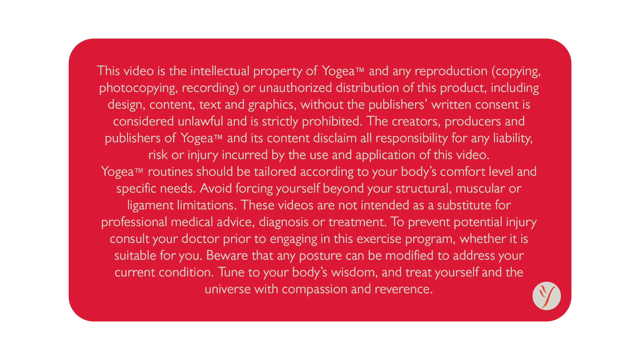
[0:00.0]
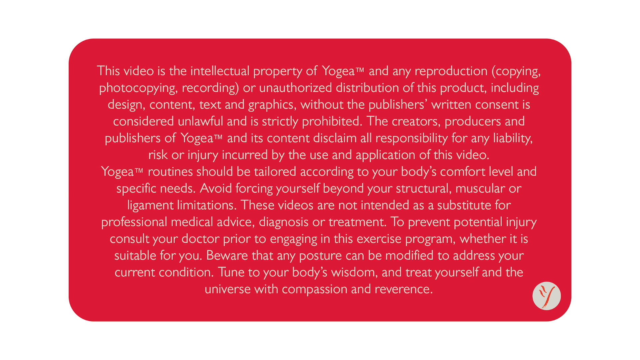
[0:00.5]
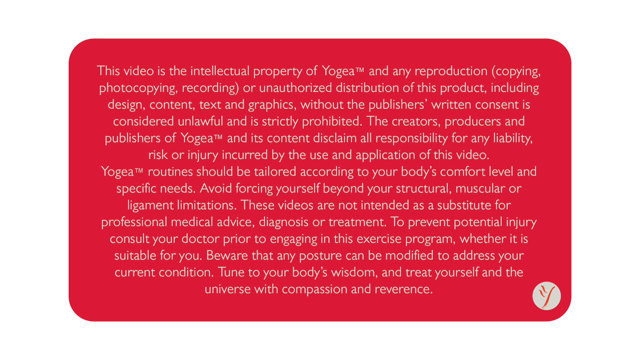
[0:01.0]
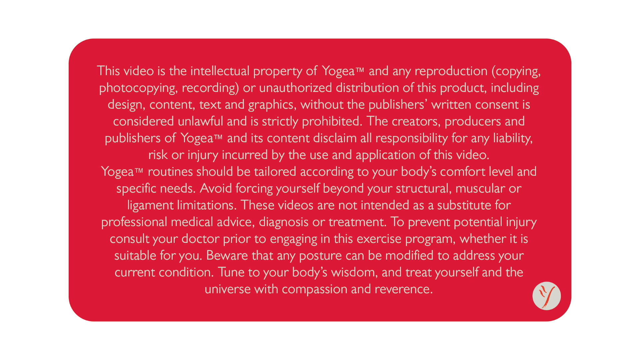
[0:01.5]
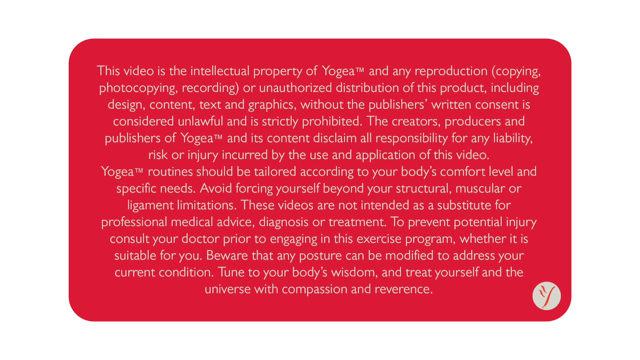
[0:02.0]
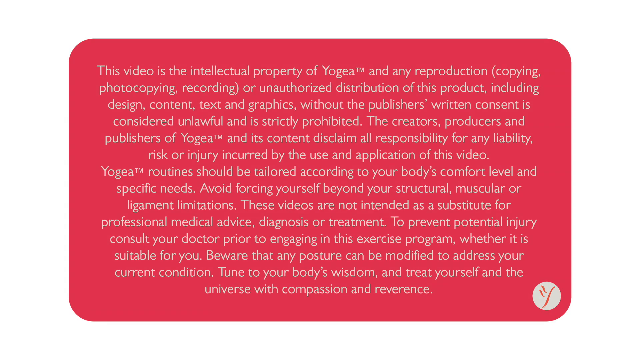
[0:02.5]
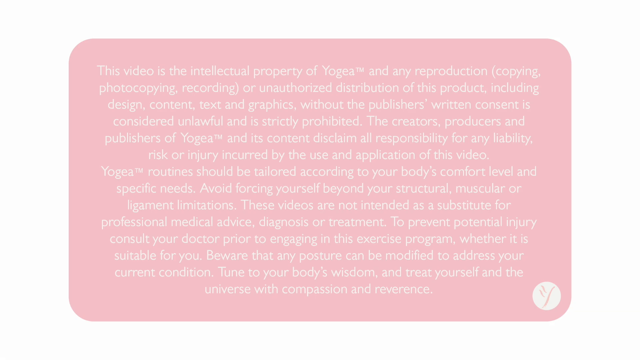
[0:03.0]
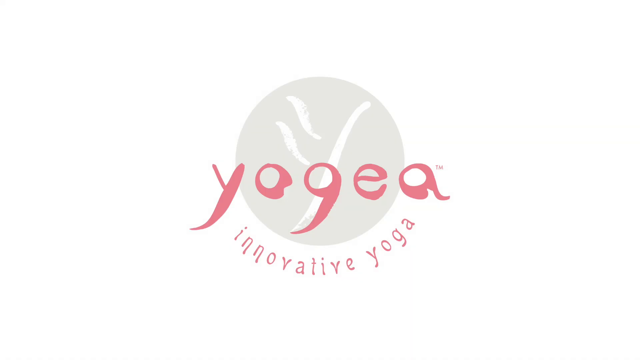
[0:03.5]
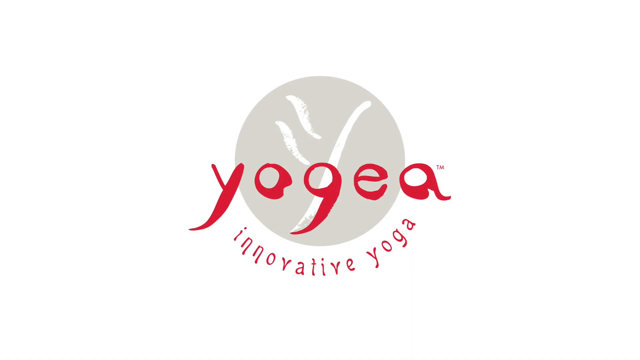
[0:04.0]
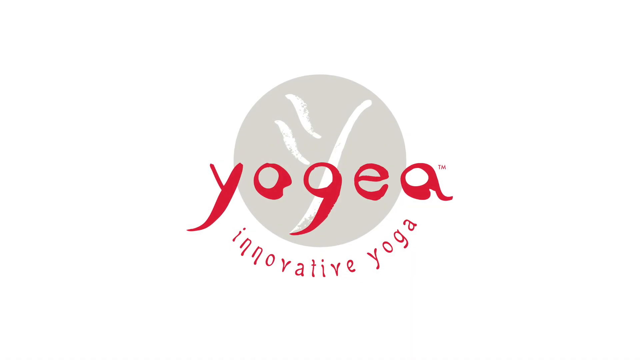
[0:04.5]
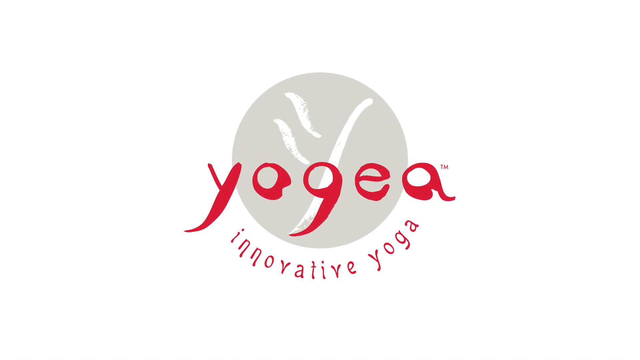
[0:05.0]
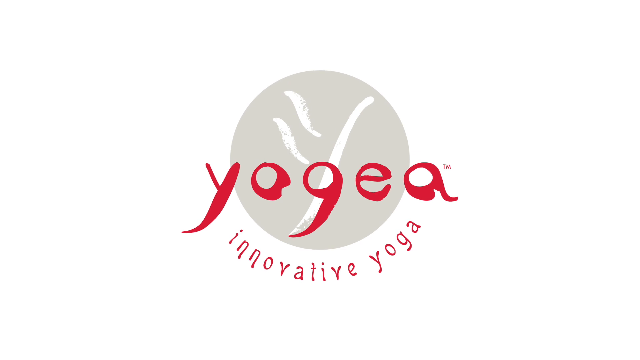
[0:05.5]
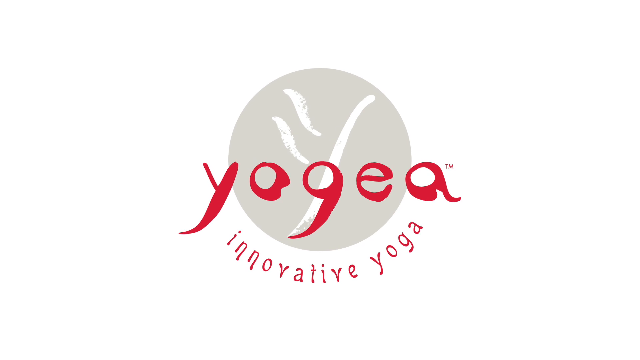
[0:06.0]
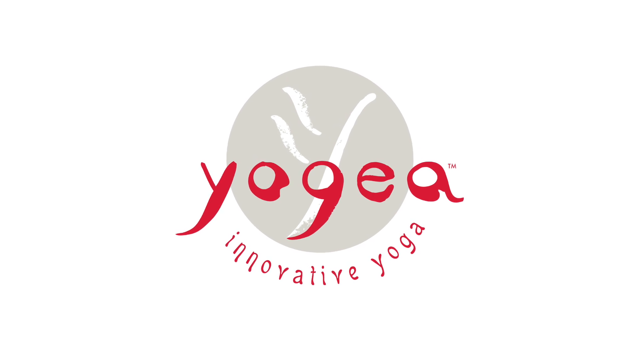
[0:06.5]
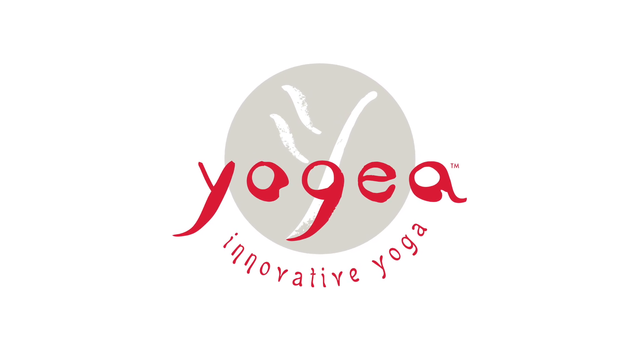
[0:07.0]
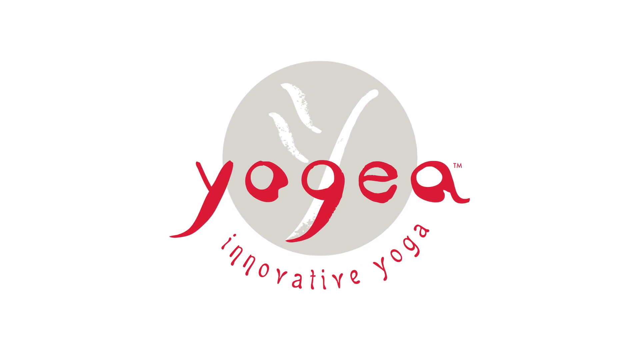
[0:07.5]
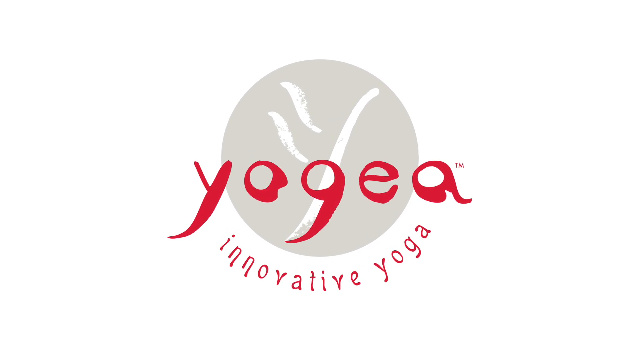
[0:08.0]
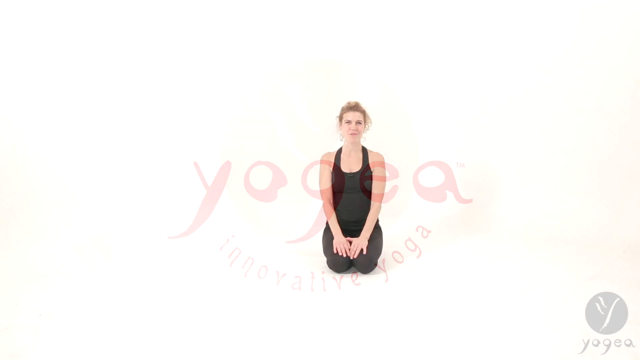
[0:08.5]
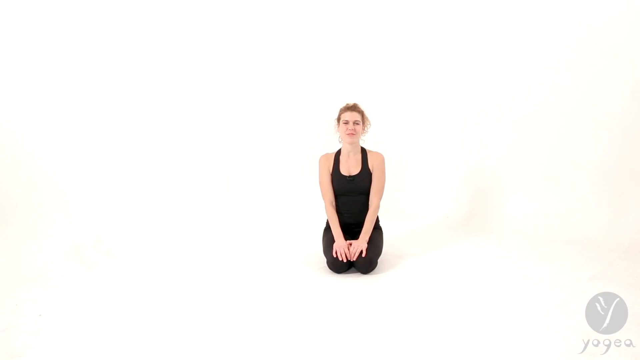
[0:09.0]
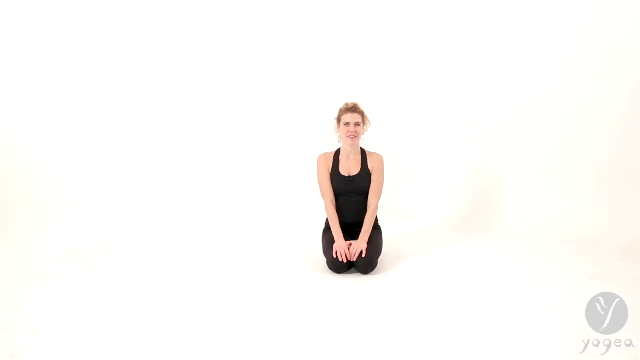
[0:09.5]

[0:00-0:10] The video begins with a message written in tiny print on a red background. It reads: "this video is the intellectual property of Yogea and any reproduction, photocopying, recording, or unauthorized distribution of this product, including design, content, text, and graphics without the publisher's written consent is considered unlawful and is strictly prohibited. The creators, producers, and publishers of Yogea and his content disclaim all responsibility for any liability, risk, or injury incurred by the use and application of this video." The message stays on the screen for about two minutes. A logo follows, and after it a woman dressed in a black leotard appears, leaning and facing forward. She is speaking.